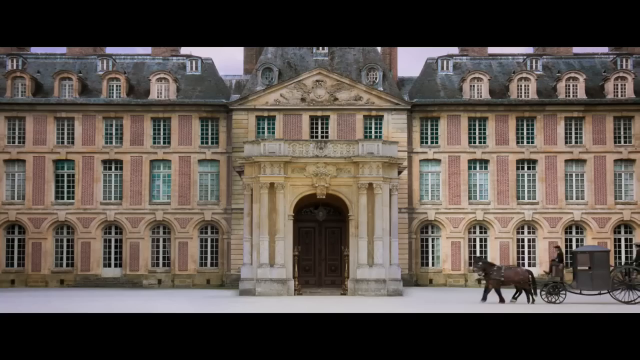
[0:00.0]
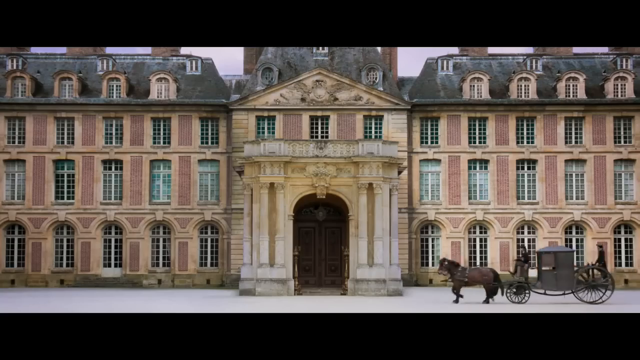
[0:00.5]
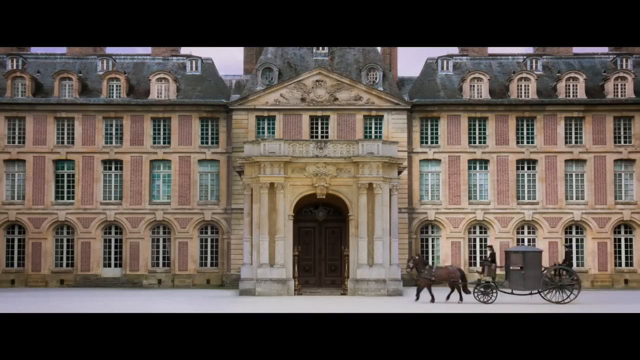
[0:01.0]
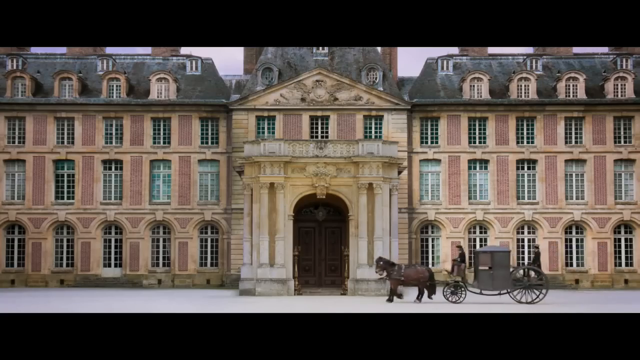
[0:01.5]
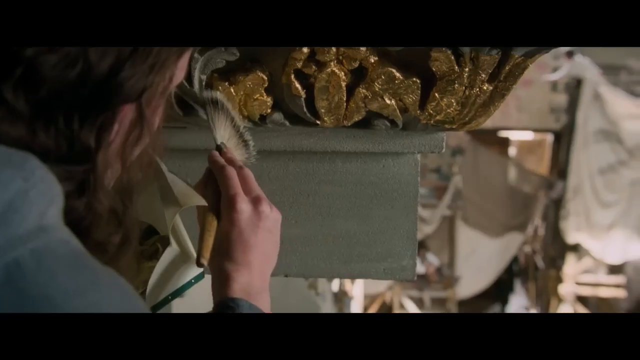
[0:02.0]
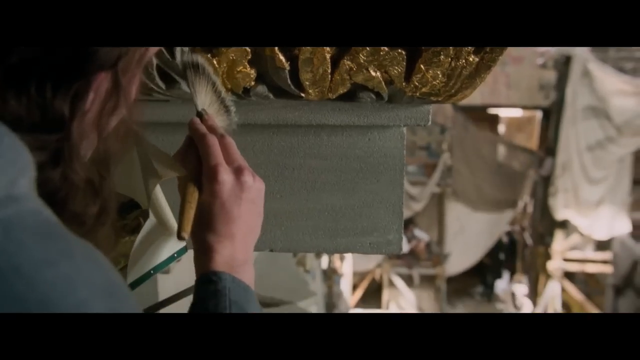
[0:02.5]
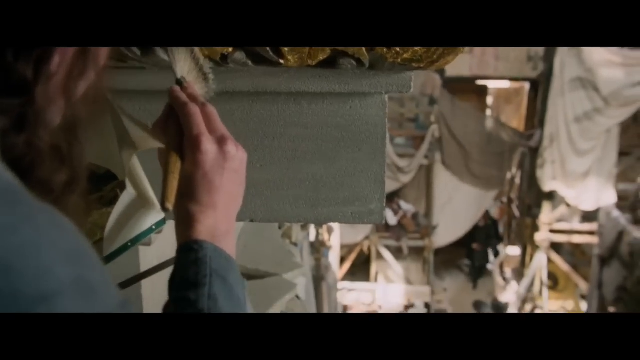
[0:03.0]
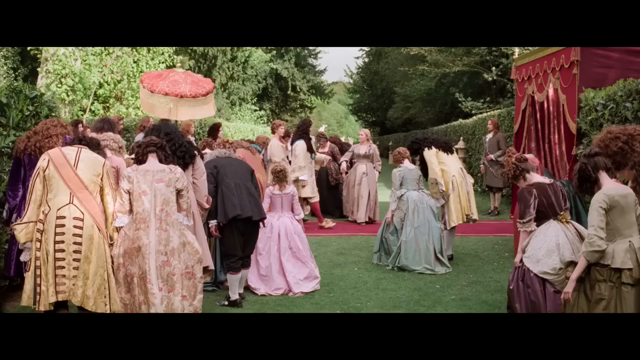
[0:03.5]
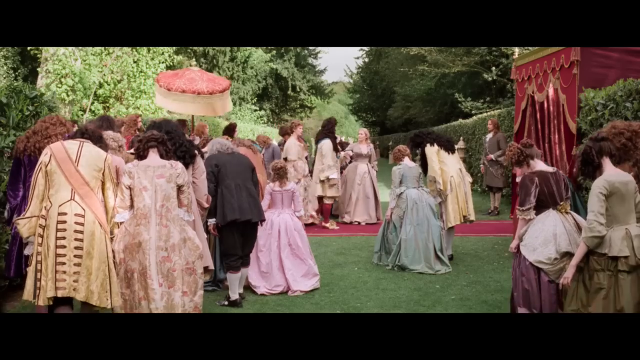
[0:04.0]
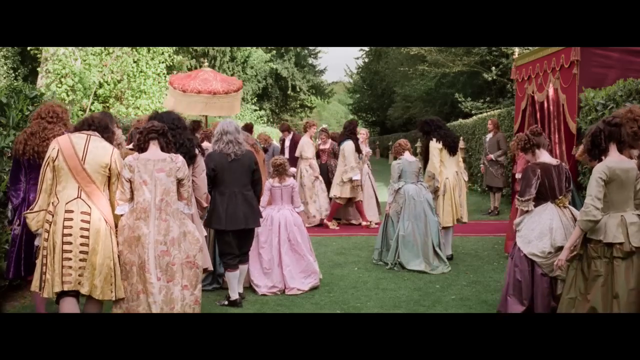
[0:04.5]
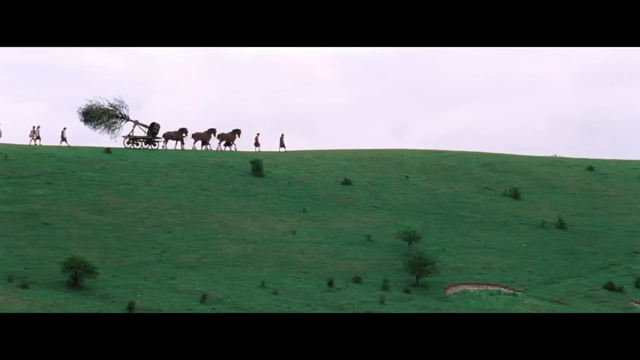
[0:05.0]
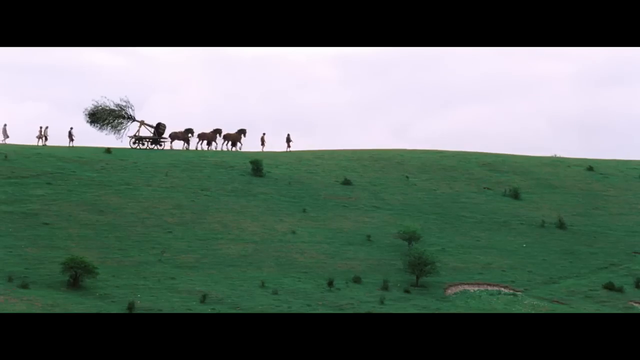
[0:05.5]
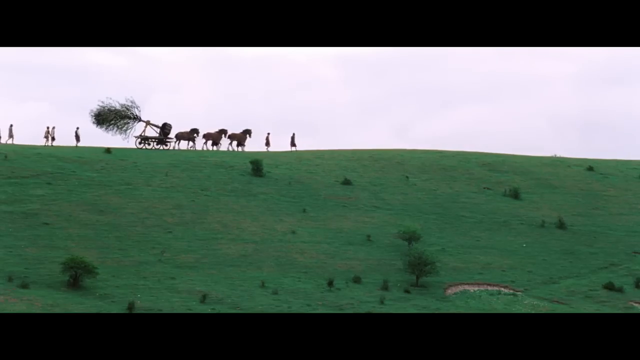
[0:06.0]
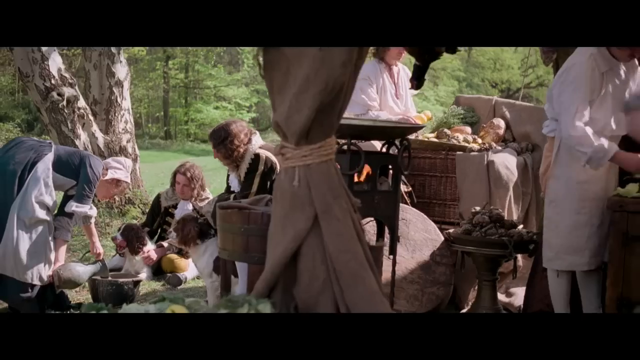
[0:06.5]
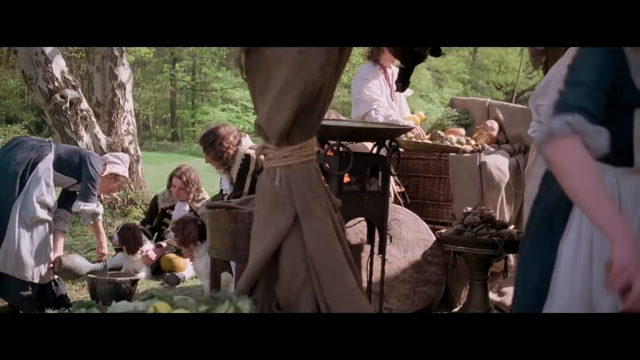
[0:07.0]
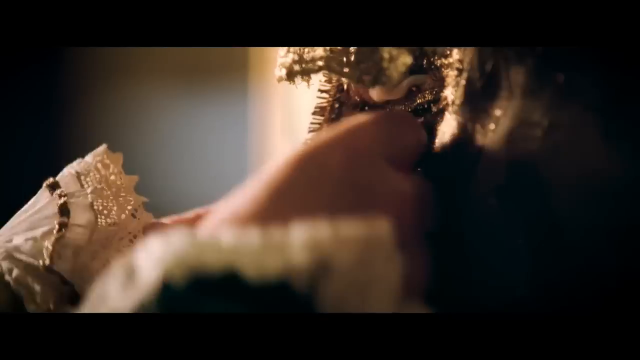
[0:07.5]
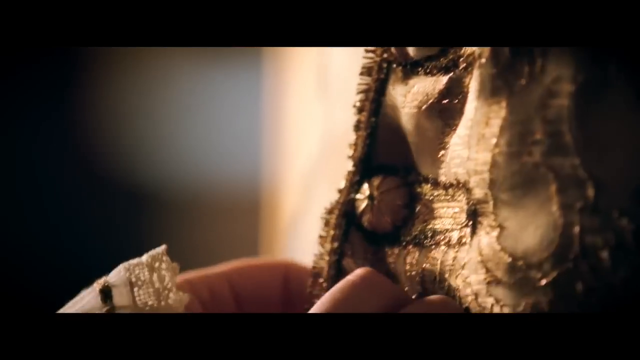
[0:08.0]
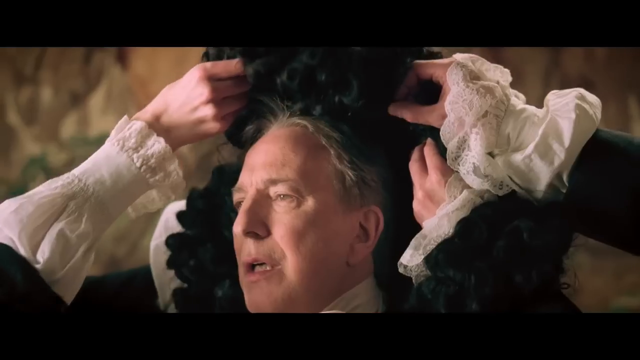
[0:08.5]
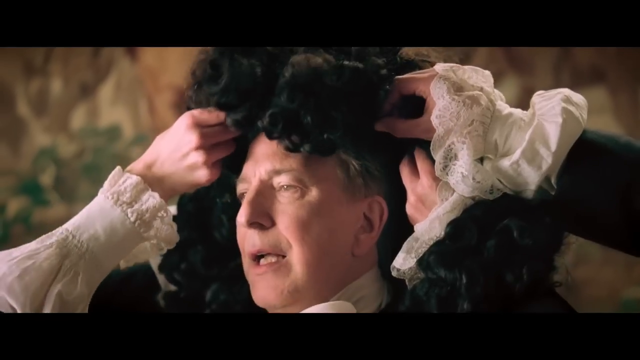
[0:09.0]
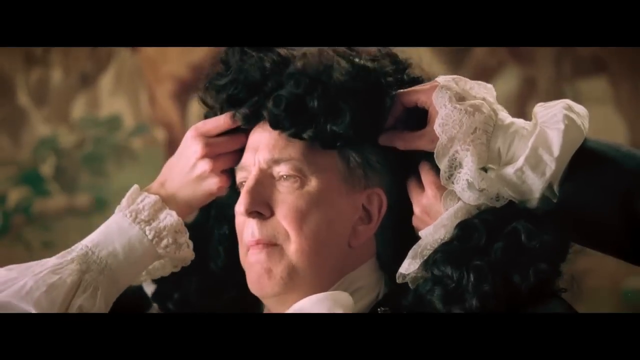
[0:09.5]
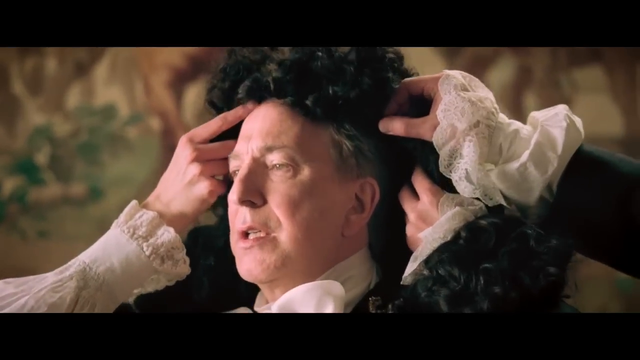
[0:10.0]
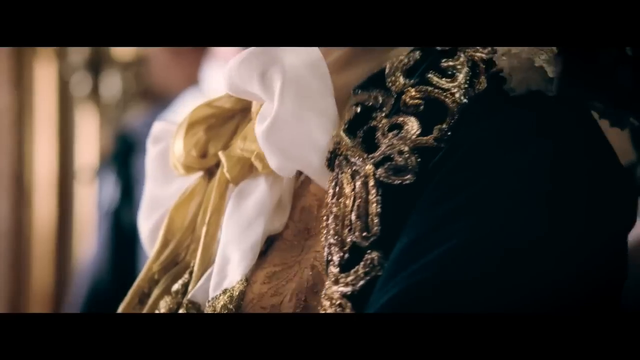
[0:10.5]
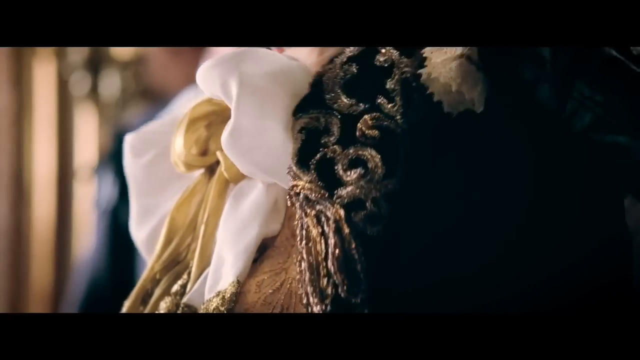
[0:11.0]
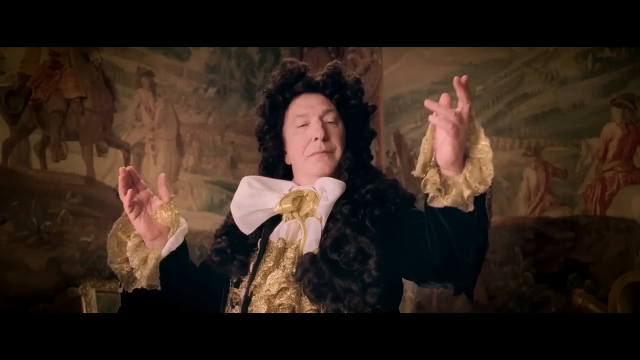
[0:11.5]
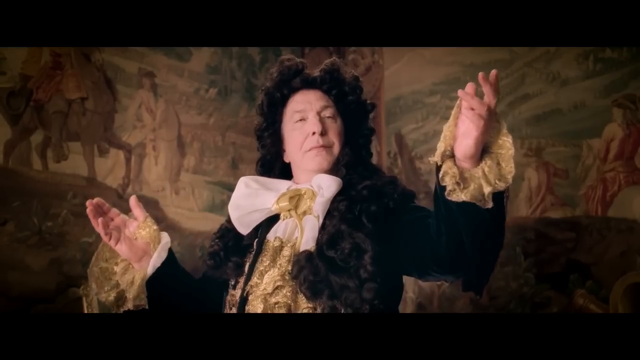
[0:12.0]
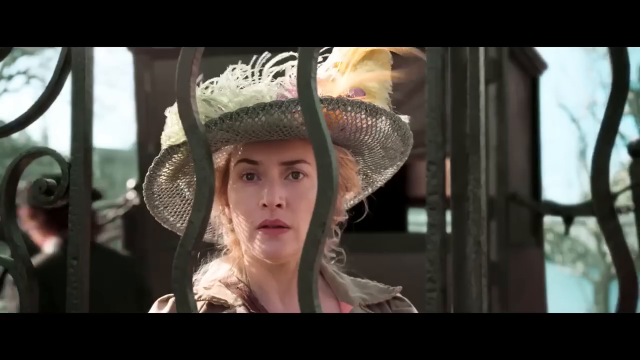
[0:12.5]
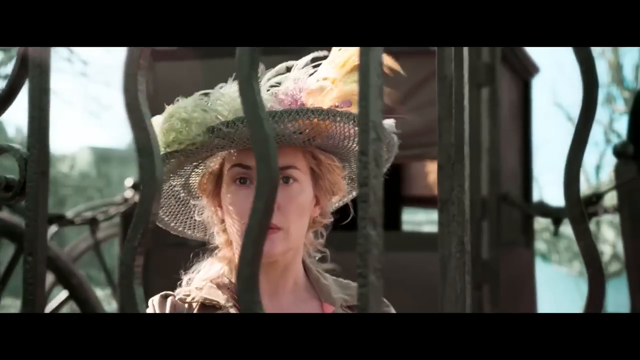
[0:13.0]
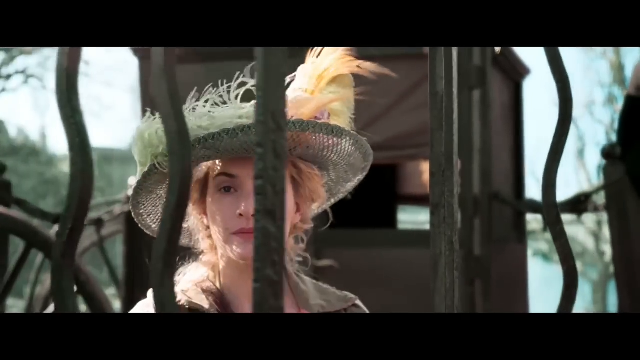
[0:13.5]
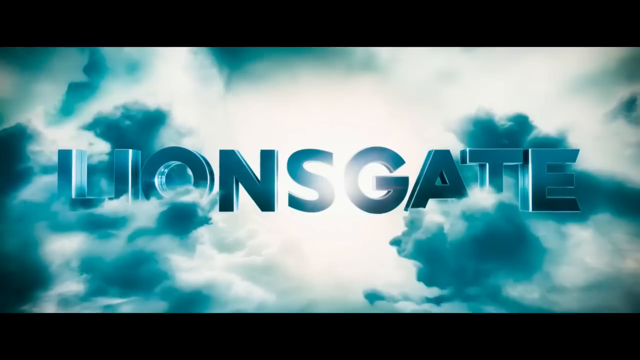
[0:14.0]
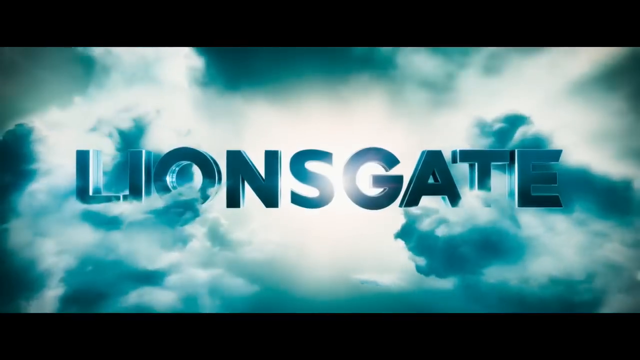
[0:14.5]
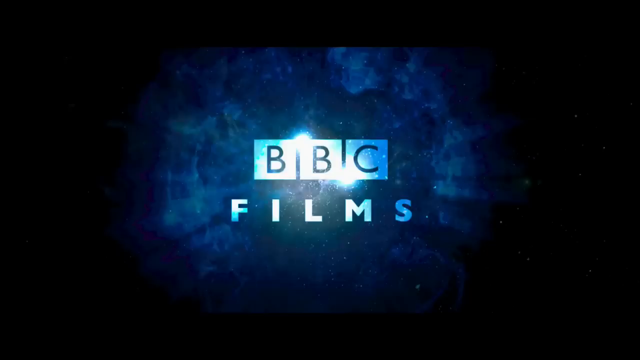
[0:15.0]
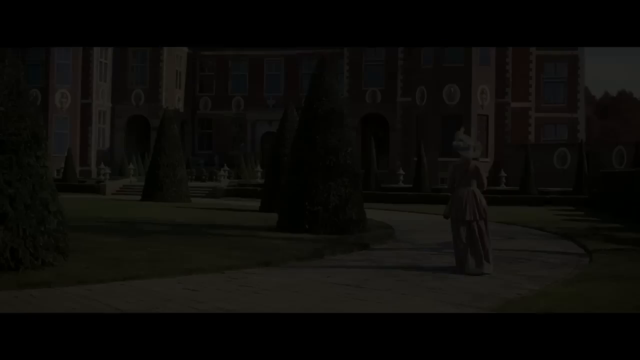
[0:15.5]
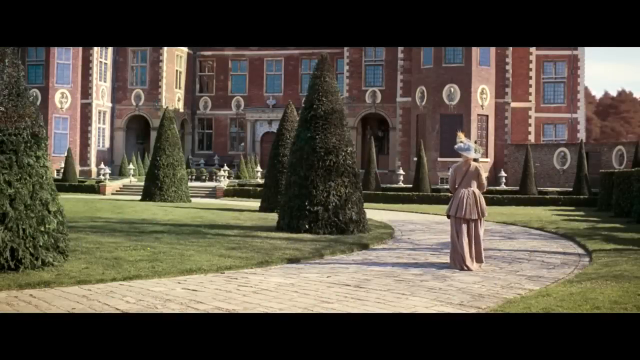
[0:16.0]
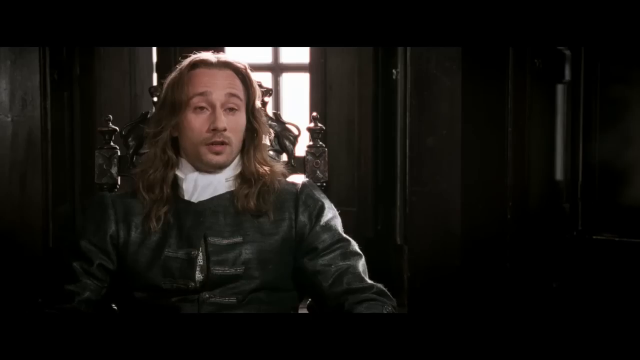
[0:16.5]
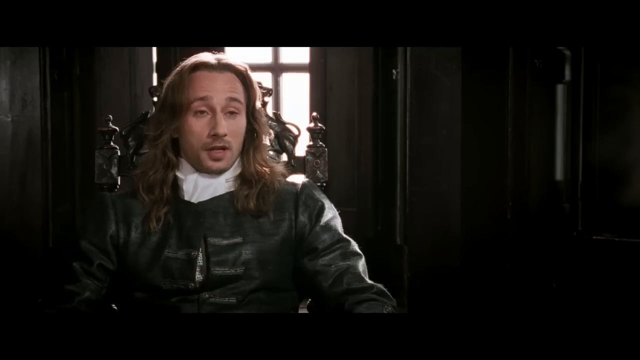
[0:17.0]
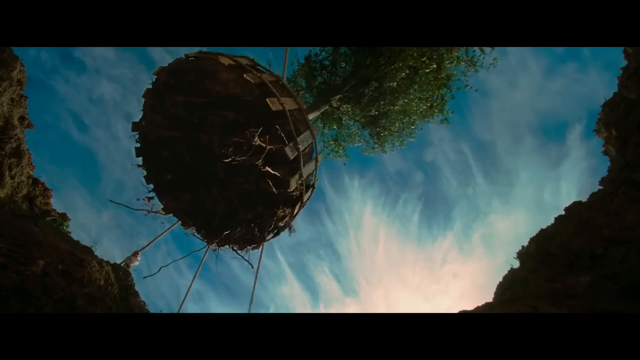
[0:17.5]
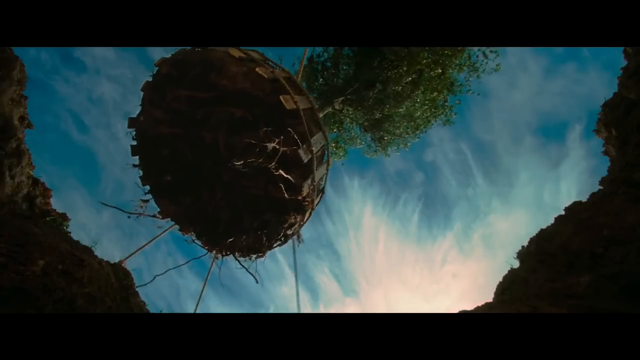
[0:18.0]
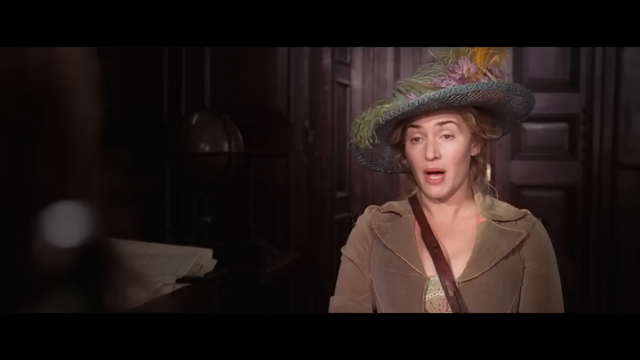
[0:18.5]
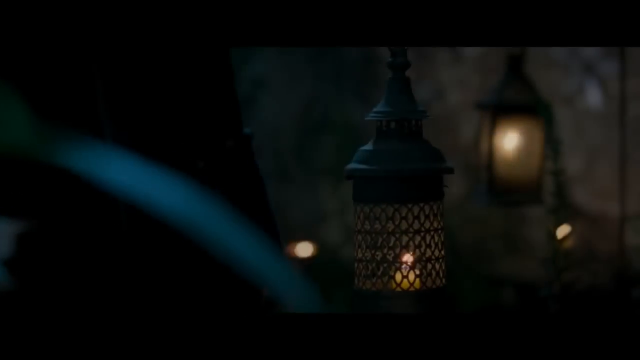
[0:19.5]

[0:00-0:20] A horse carriage drawn by horses, almost three of them, appears in what looks like an old-fashioned movie made a long time ago. The people are very neatly dressed. People bow down as others walk on a red carpet, suggesting a royal family. The carriage is carrying what looks like a tree, and about six people accompany it. Someone is being helped to dress for a special occasion, possibly a wedding. A man who looks like a king wears a wig like those worn by judges in court, along with a black and golden robe; he spreads his arms and seems to be enjoying himself. A credit shows the movie was produced by Lionsgate in conjunction with PBC Films. A woman walks along a pathway that leads to a house. A man with long brownish hair talks with someone. A tree is being lowered, and a lady wears a brown overcoat with something green and floral on her head.